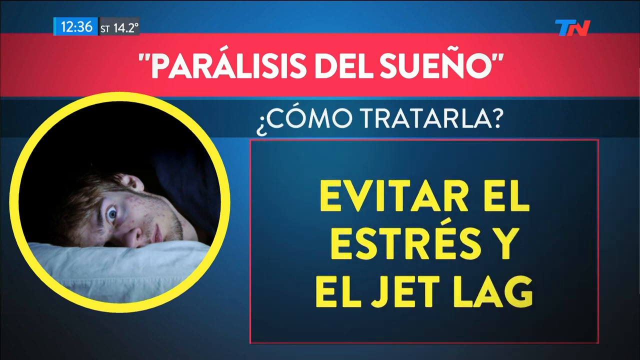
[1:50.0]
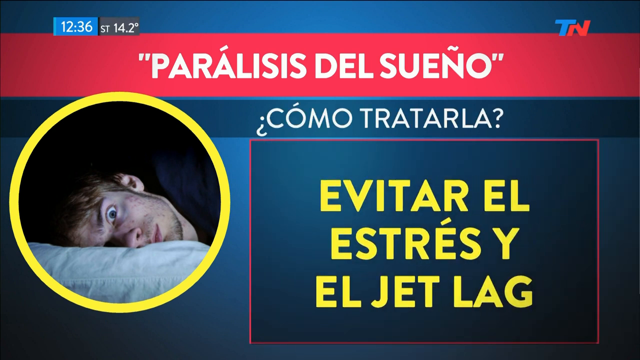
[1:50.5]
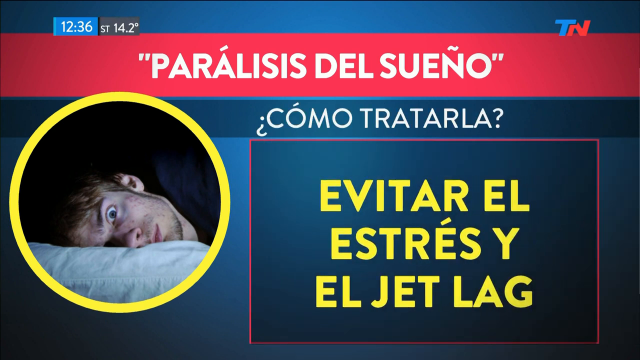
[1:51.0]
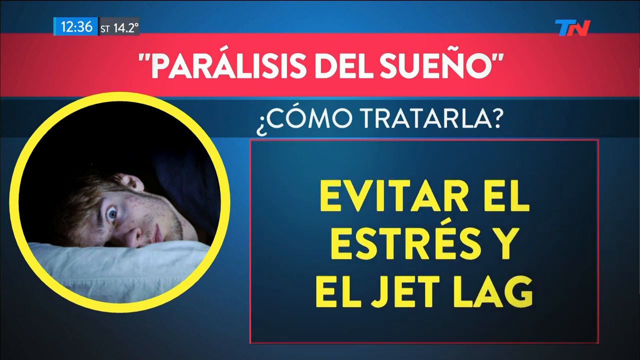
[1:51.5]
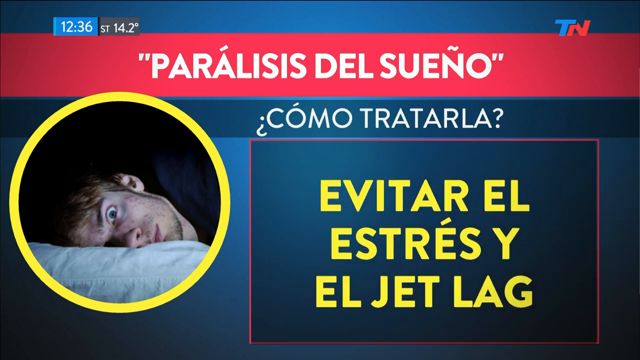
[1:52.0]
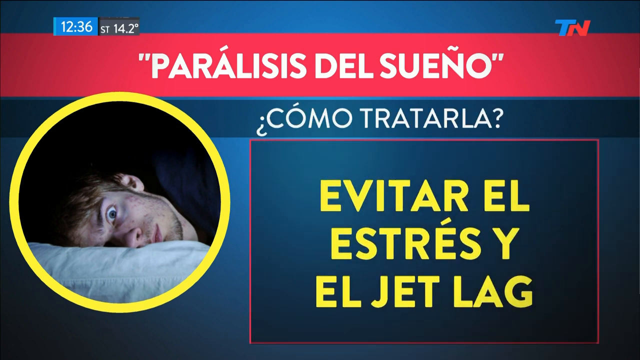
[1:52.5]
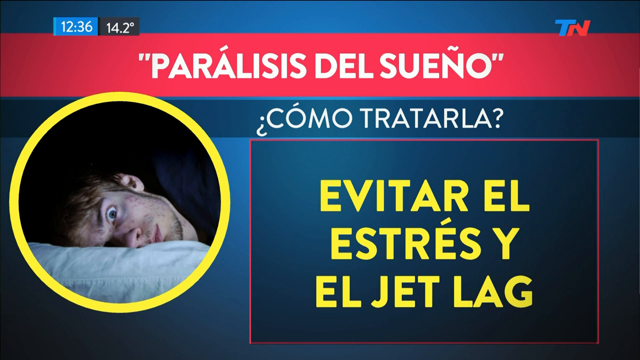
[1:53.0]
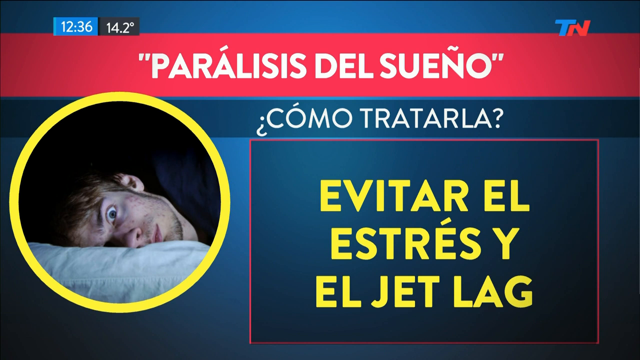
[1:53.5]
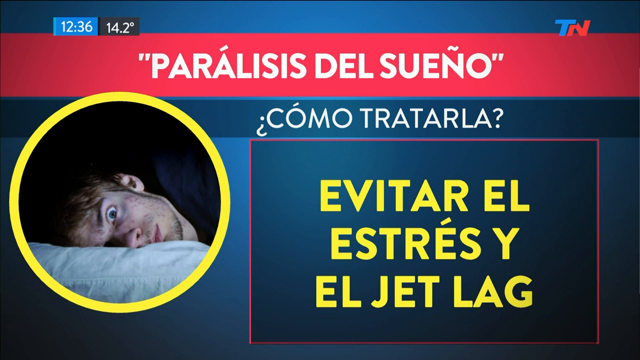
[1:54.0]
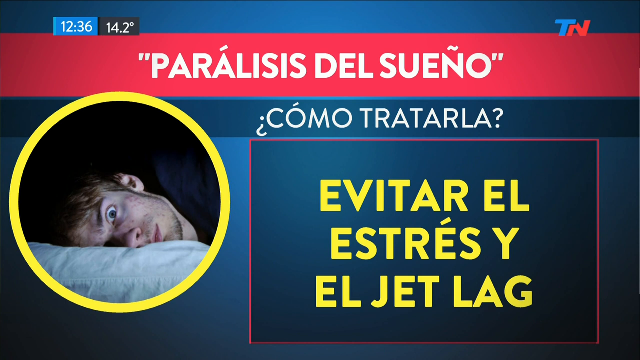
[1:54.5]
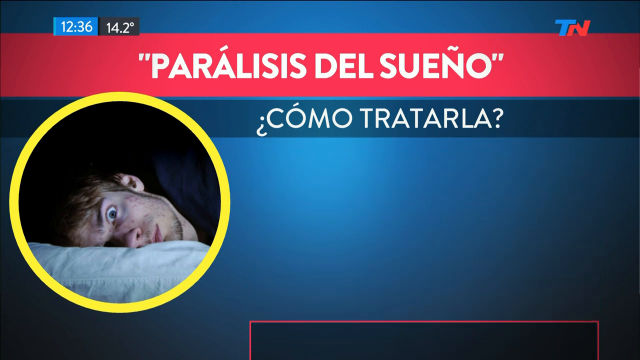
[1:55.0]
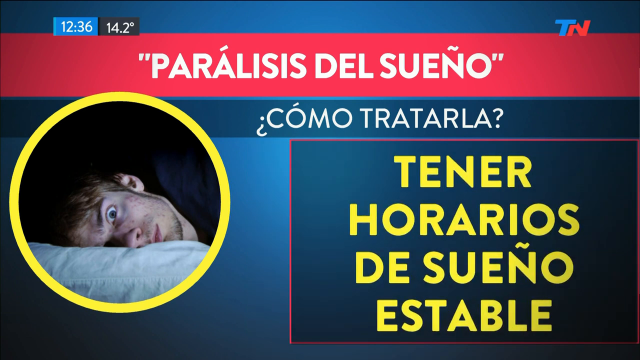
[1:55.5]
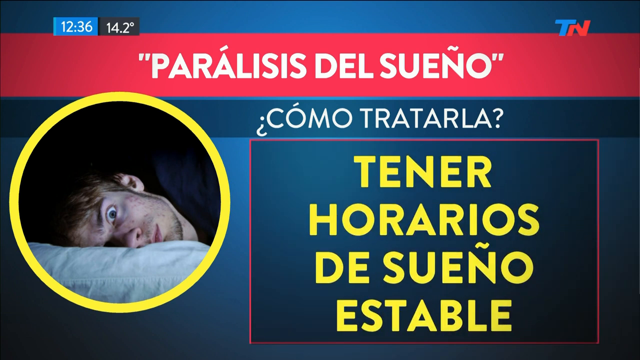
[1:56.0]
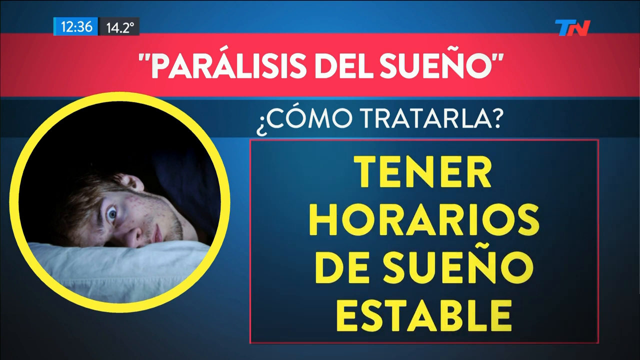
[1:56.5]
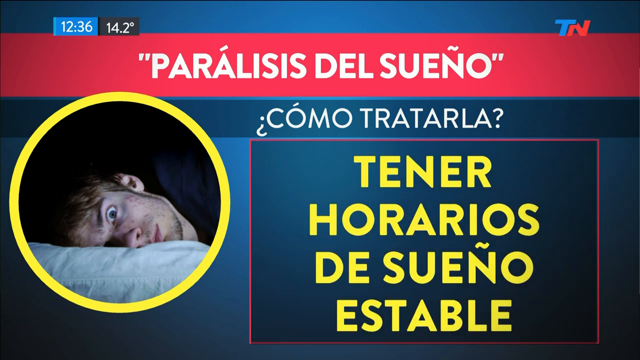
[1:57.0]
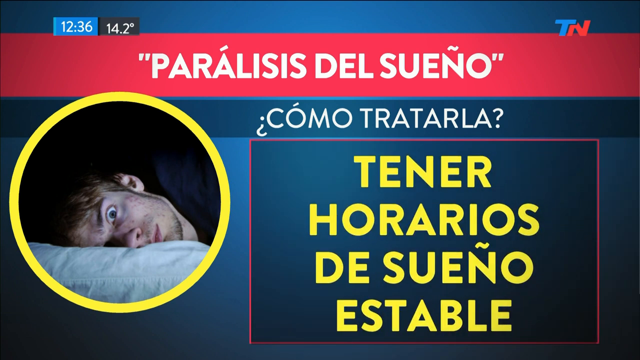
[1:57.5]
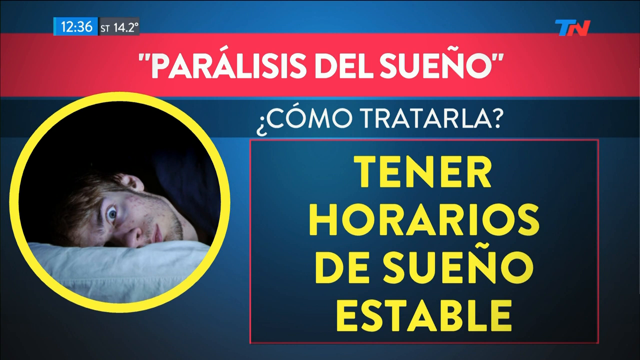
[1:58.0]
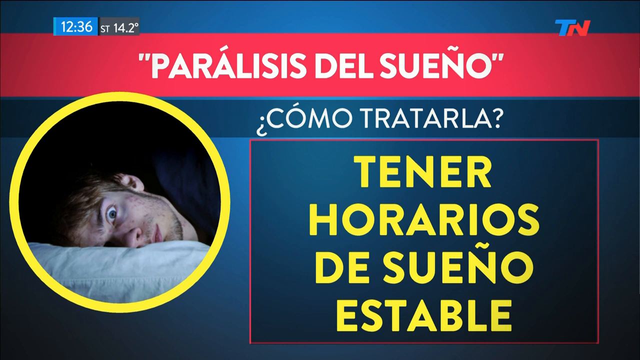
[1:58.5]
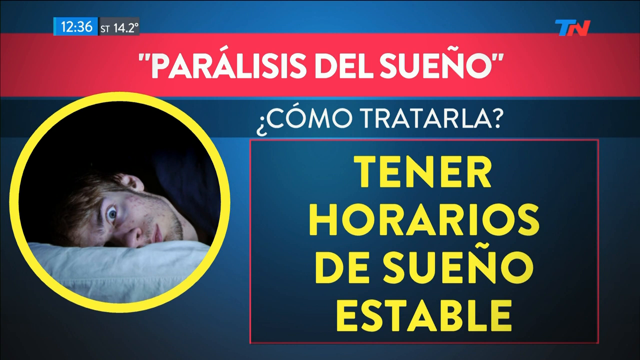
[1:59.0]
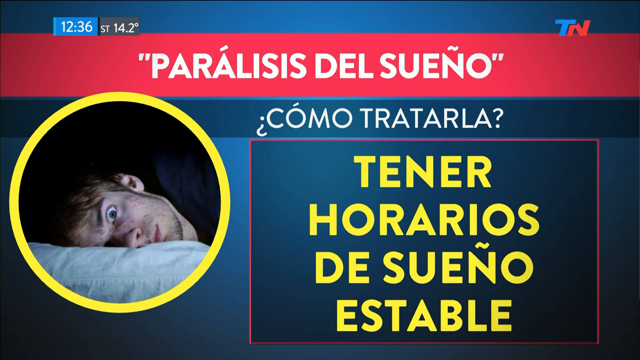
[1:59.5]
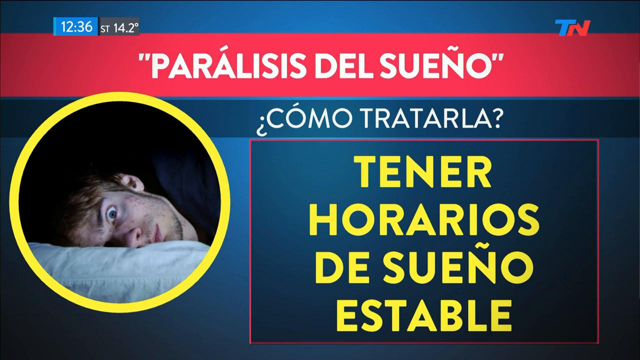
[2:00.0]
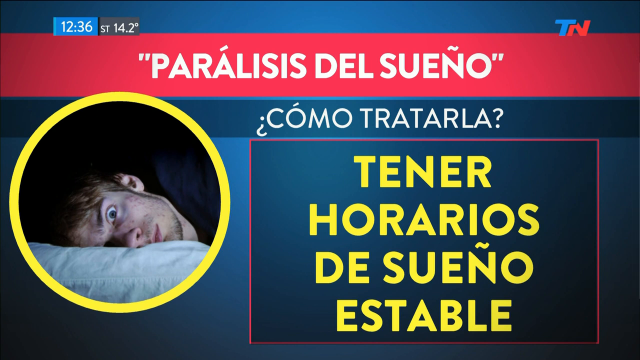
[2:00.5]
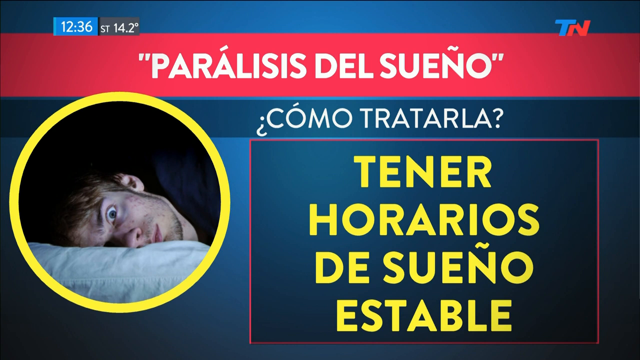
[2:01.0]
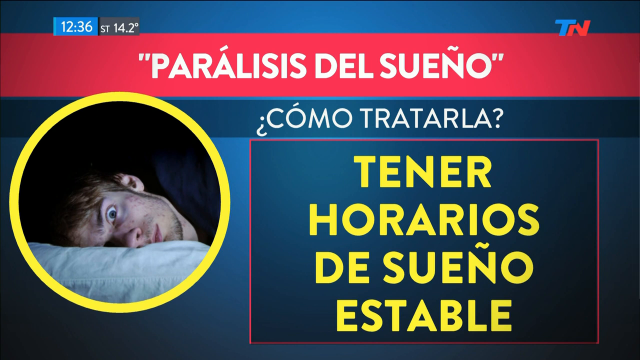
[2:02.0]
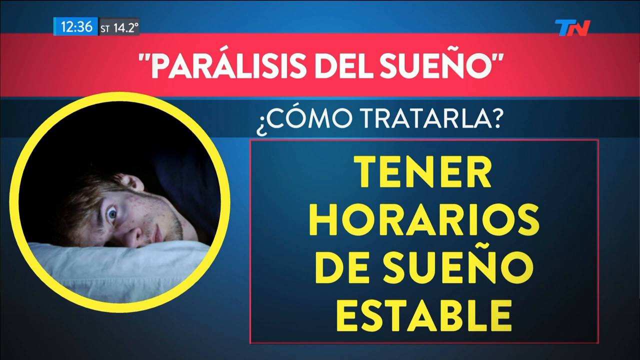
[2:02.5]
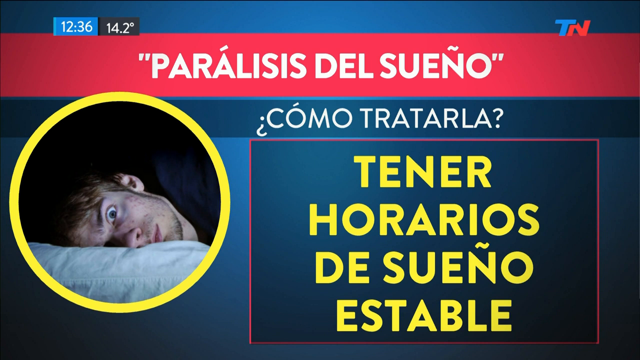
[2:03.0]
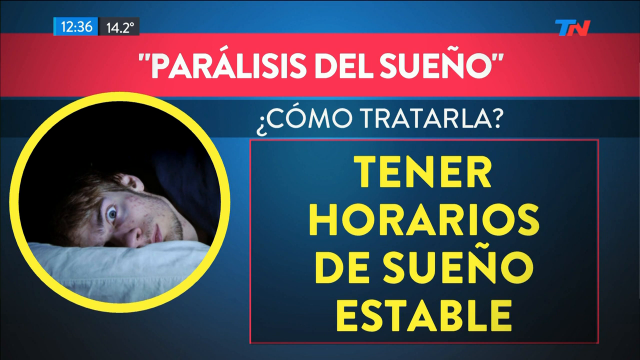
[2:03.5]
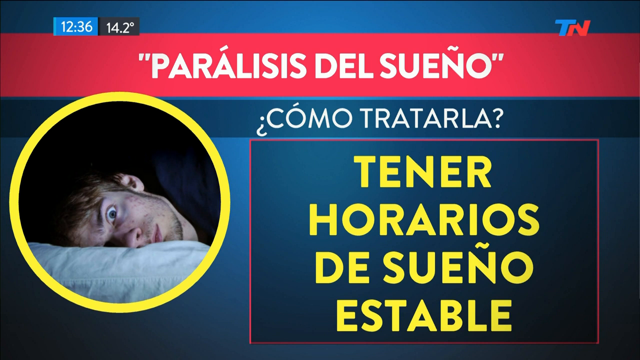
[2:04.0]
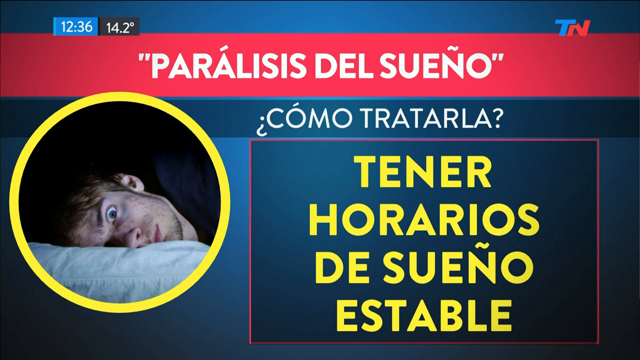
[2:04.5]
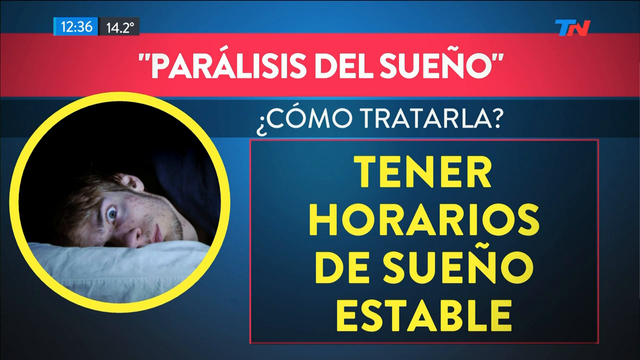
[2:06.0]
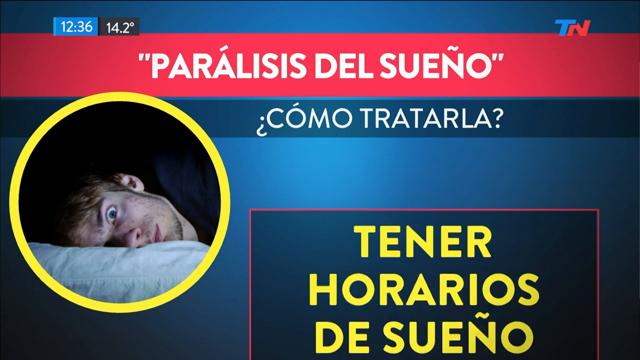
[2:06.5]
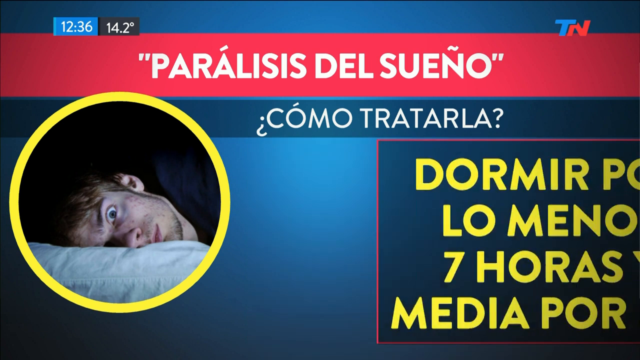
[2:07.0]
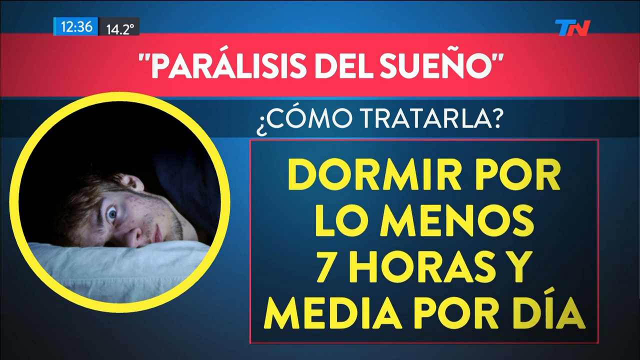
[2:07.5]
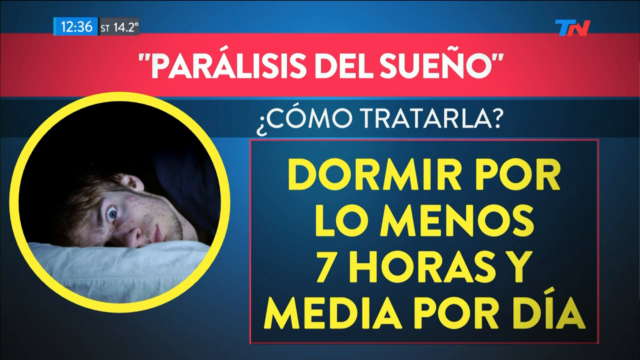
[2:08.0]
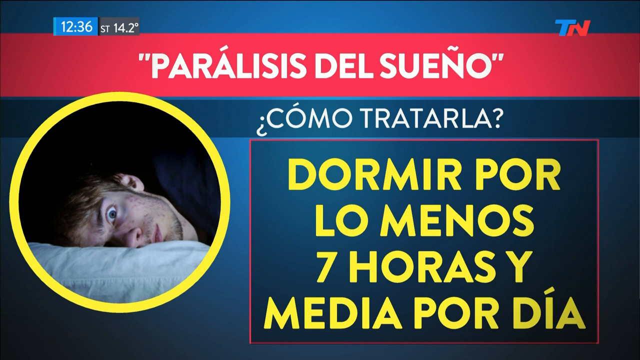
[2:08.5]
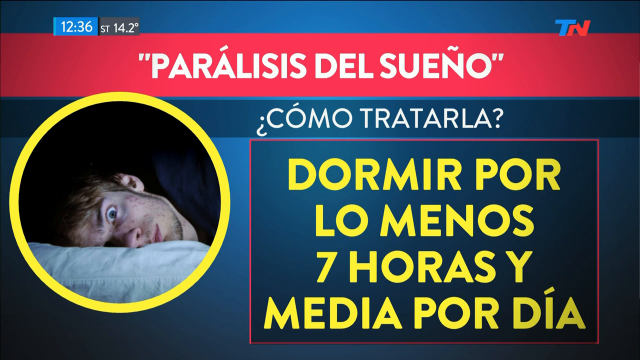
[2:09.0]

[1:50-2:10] The time shown is now 12.36. Text in a foreign language is written on screen. The setup has a blue background with paralysis written in red, while the person's head is framed in yellow against a black background. A logo with a slogan about sleep paralysis is also shown.